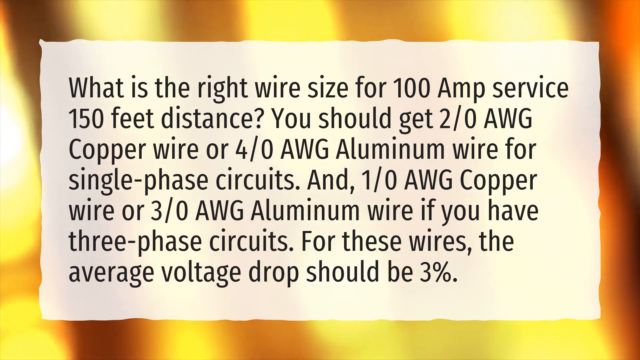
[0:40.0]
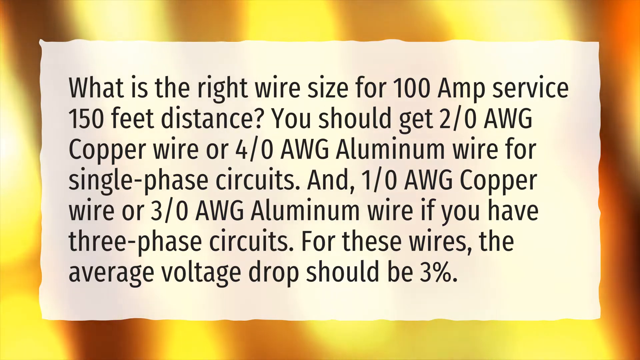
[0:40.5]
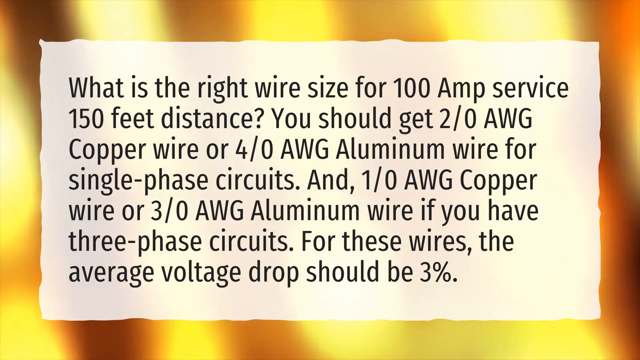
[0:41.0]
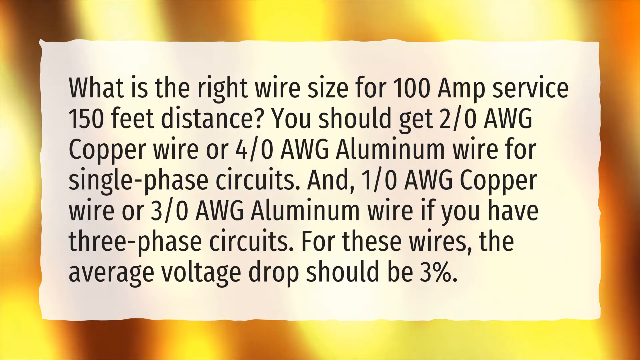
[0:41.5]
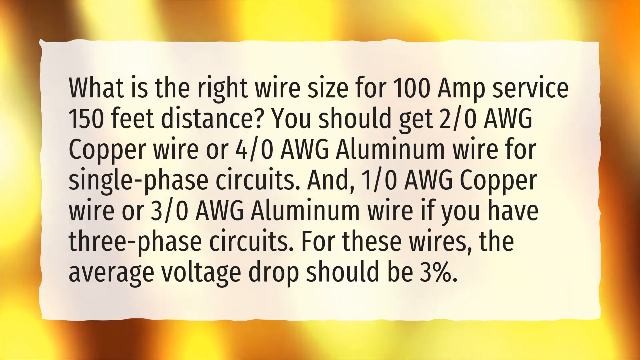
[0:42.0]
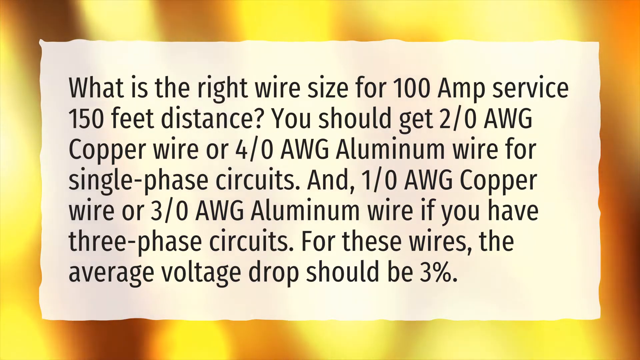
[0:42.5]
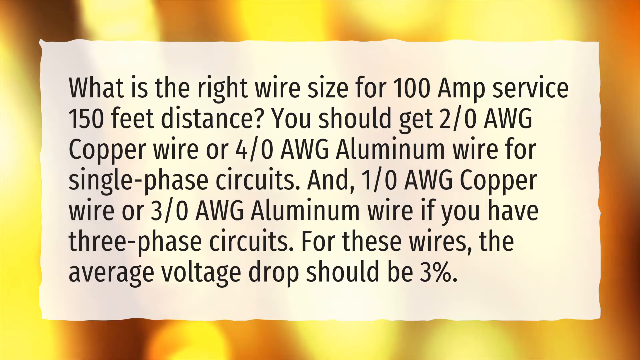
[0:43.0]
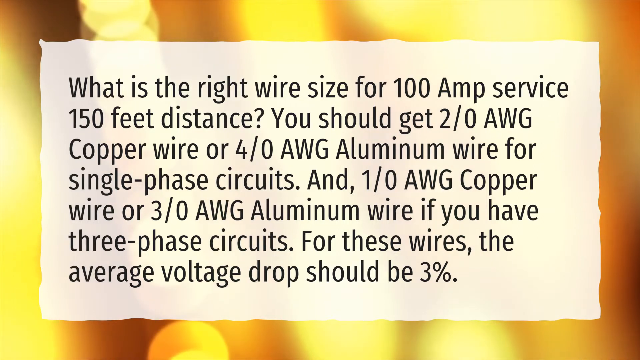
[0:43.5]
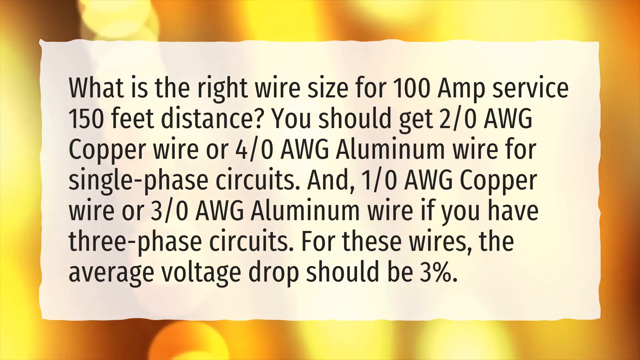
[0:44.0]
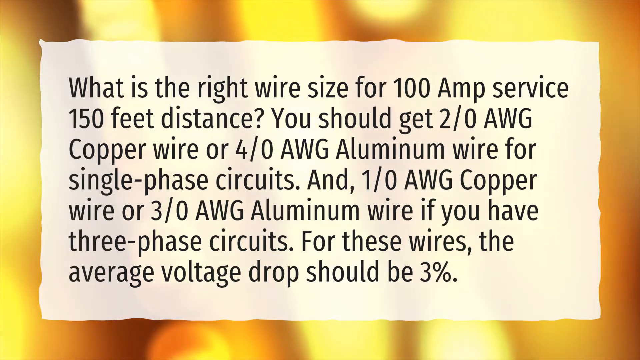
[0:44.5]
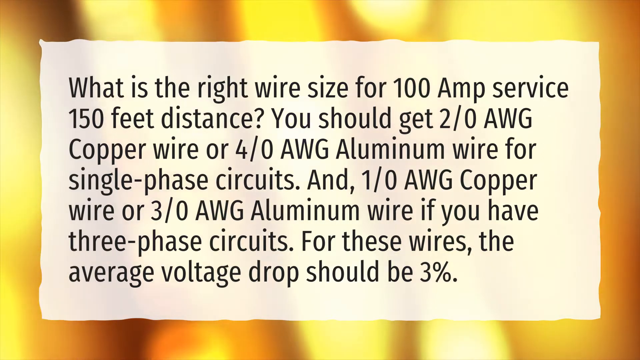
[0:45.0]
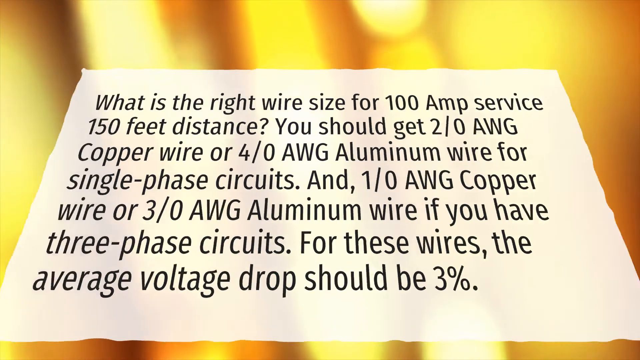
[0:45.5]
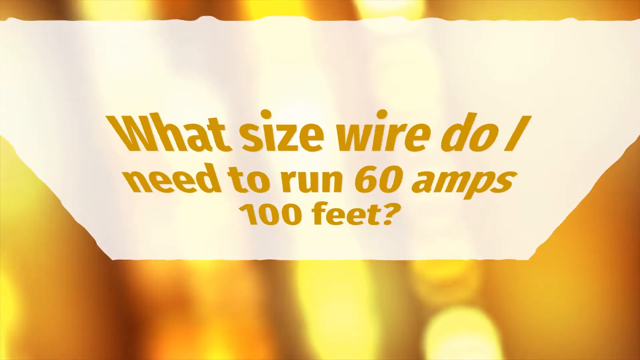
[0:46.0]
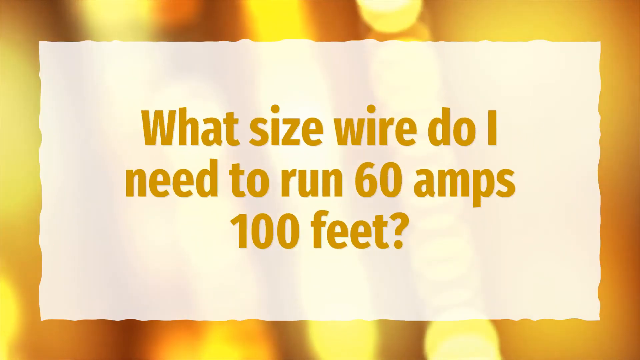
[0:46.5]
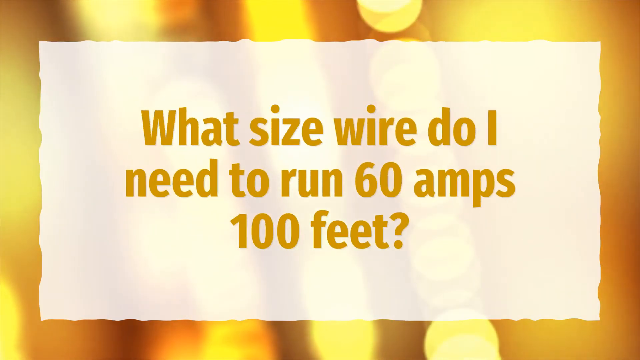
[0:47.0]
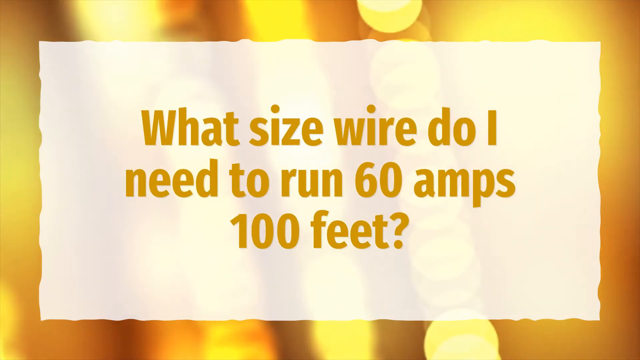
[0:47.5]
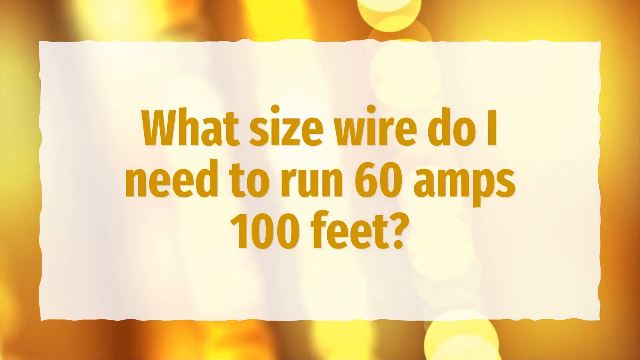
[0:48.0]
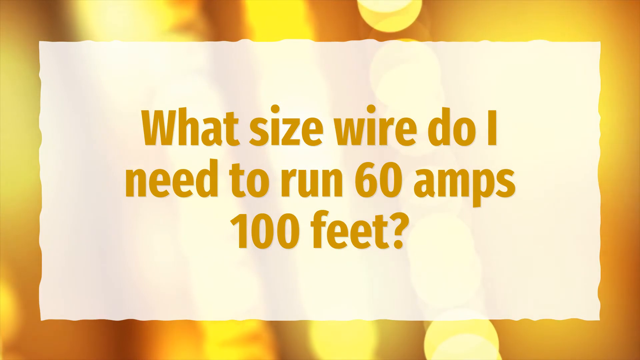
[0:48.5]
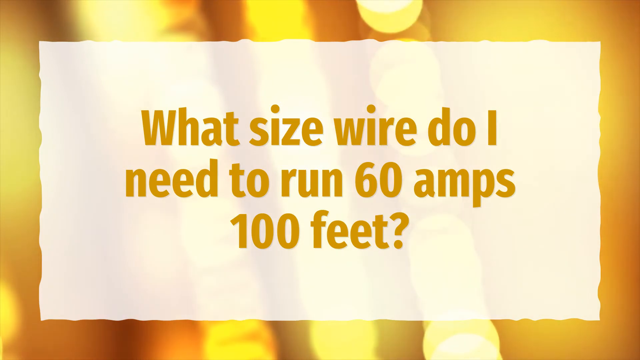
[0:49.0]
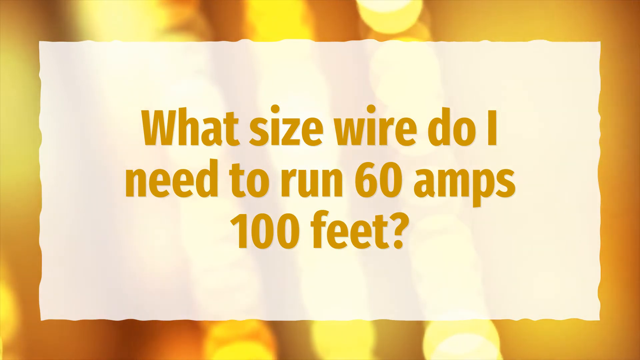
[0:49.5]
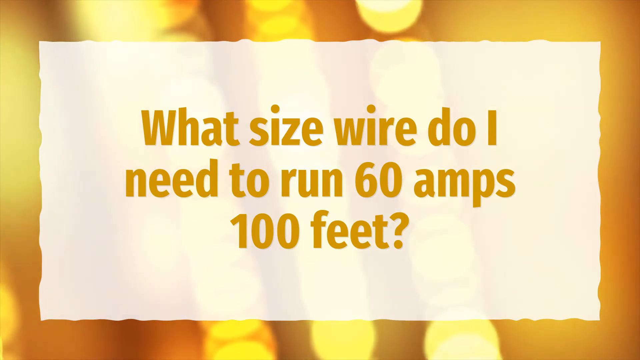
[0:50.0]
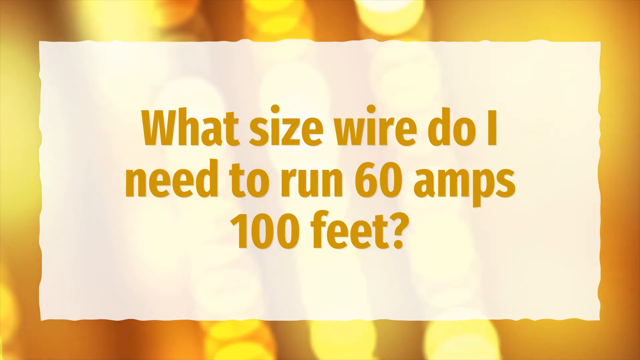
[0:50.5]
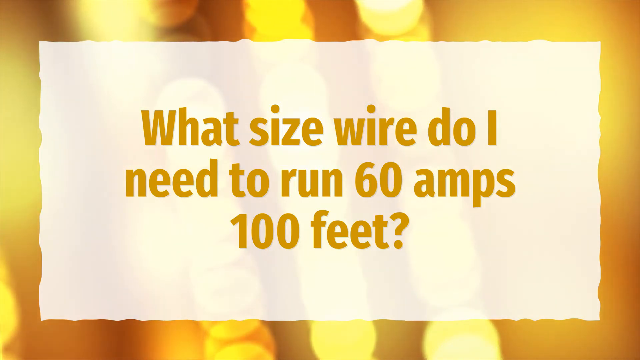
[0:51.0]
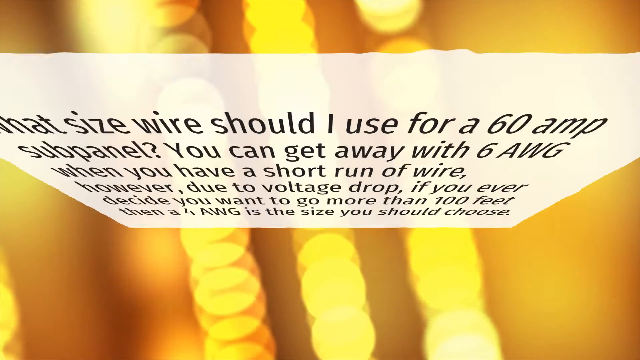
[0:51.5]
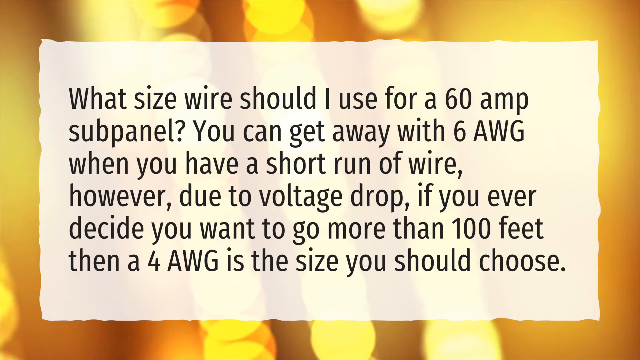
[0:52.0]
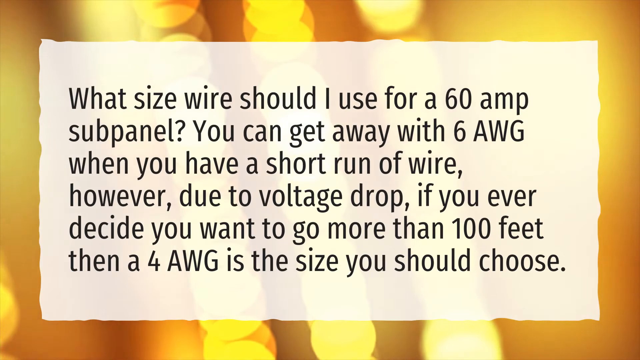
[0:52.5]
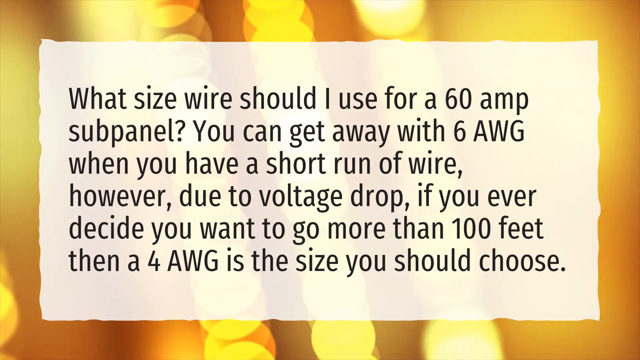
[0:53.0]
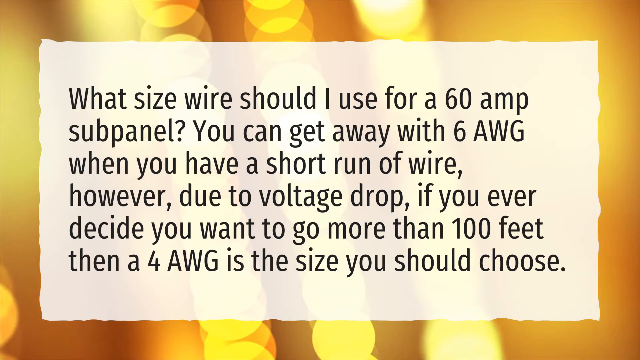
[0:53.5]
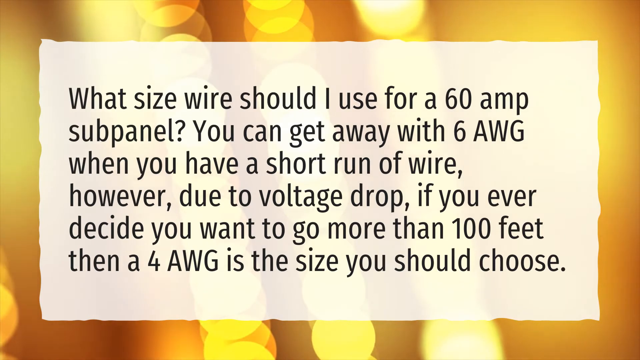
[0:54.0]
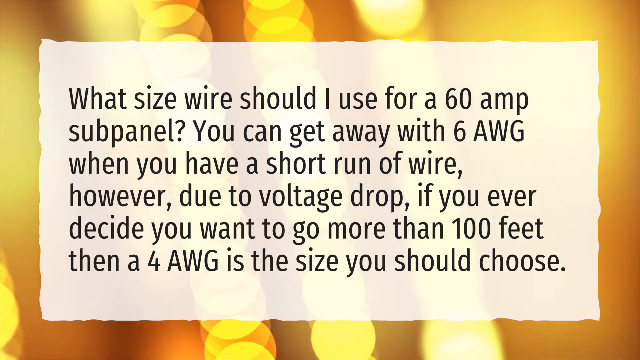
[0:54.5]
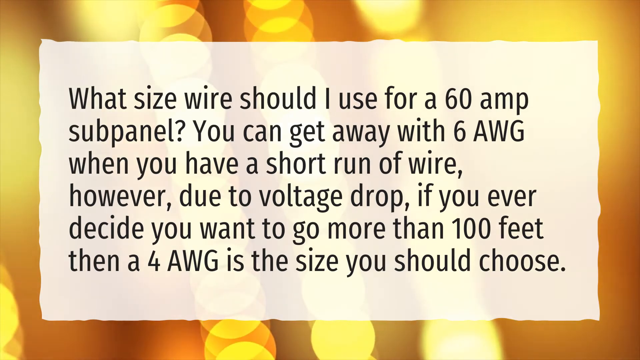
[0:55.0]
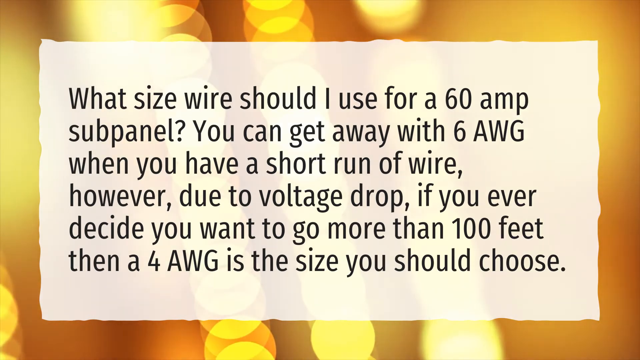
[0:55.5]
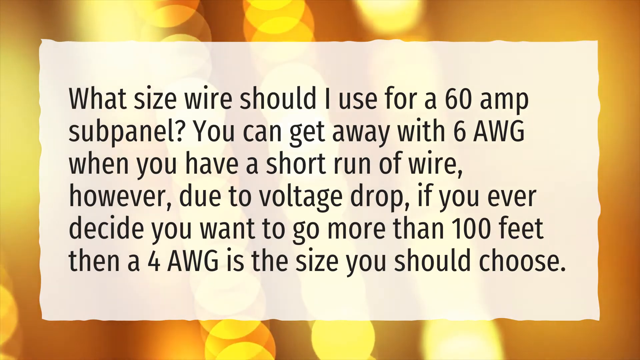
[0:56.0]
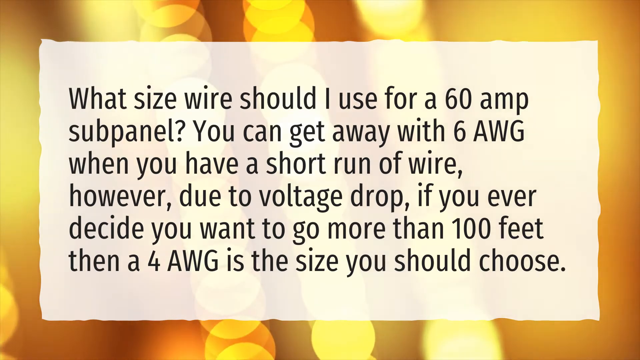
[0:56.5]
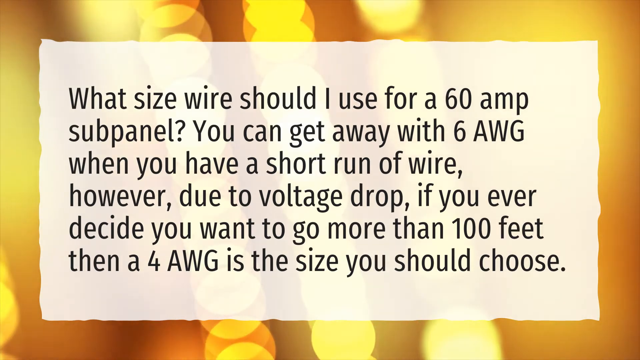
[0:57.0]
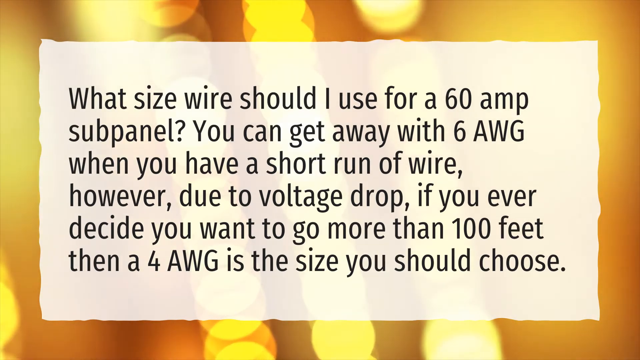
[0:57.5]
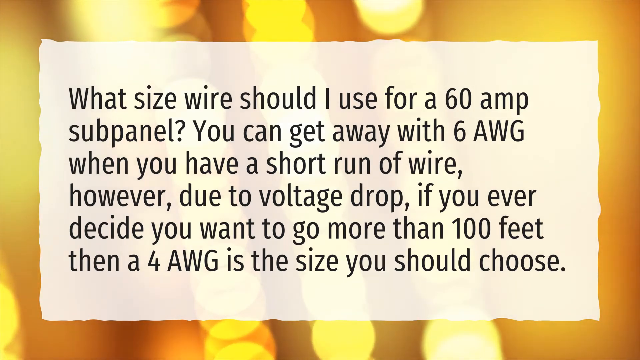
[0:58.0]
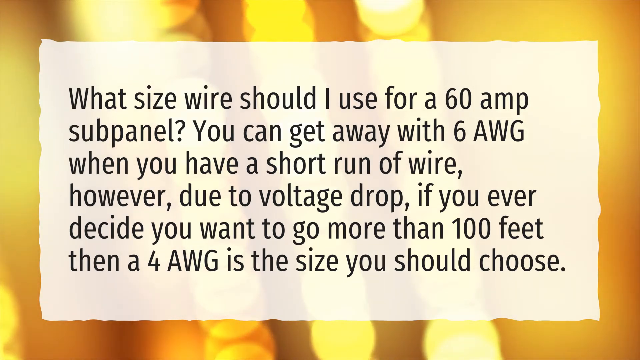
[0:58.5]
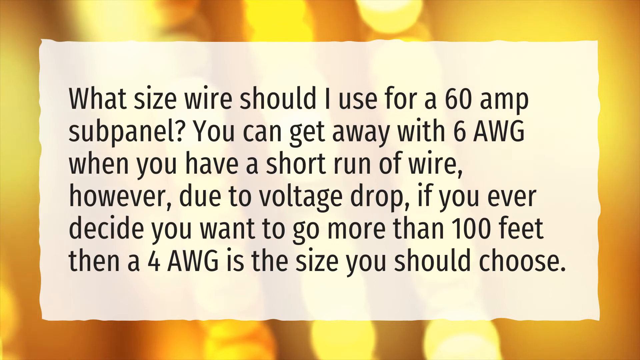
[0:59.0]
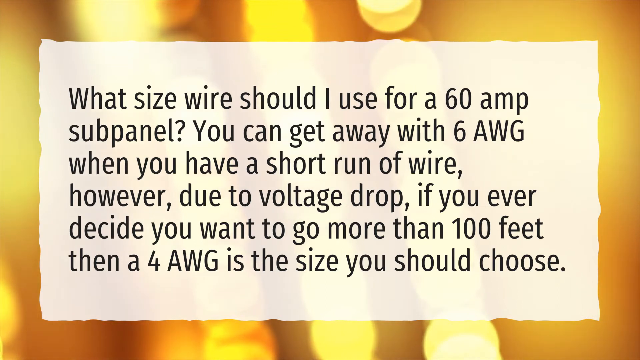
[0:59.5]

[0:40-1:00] A sort of transparent rectangular shape in the middle of the frame holds a question and answer, while yellowish-orange lights pulse in the background. The middle portion of the rectangle changes, and new text appears in an orangish color: "what size wire do I need to run 60 amps 100 feet?" The question stays for a couple of seconds before flipping, and in the same area a question and answer appear: "what size wire should I use for a 60 amp sub panel?" followed by "you can get away with 6 AWG when you have a short run of wire. However, due to voltage drop, if you ever decide you want to go more than 100 feet then a 4 AWG is the size you should choose." All of it is in very black text in a fairly thin font, apparently. The question and answer remain on the page while the yellow lights behind continue their sort of pulsing effect.